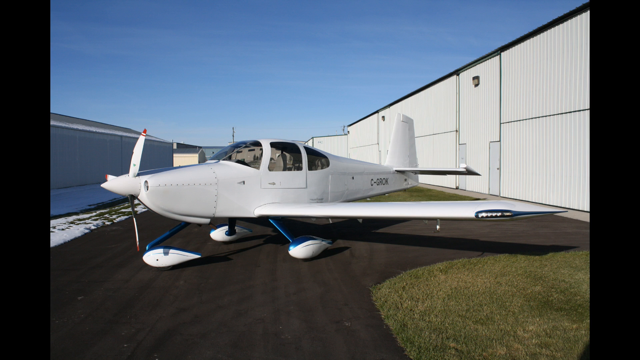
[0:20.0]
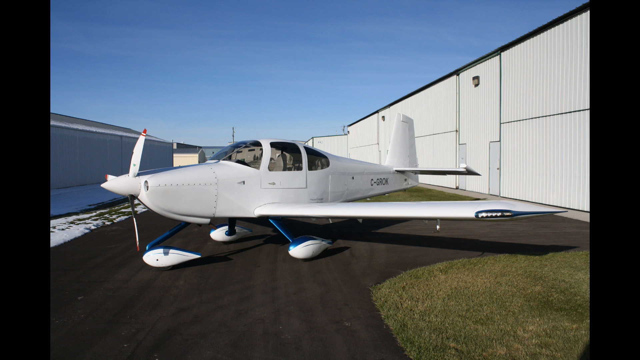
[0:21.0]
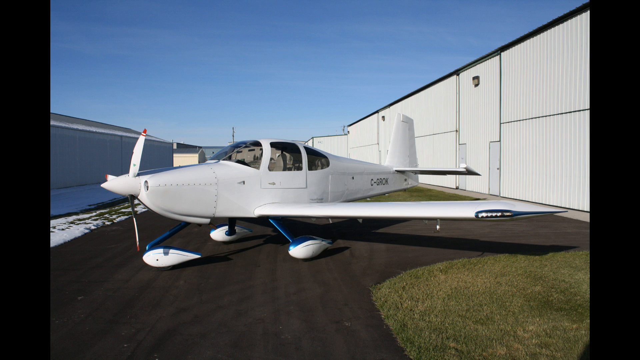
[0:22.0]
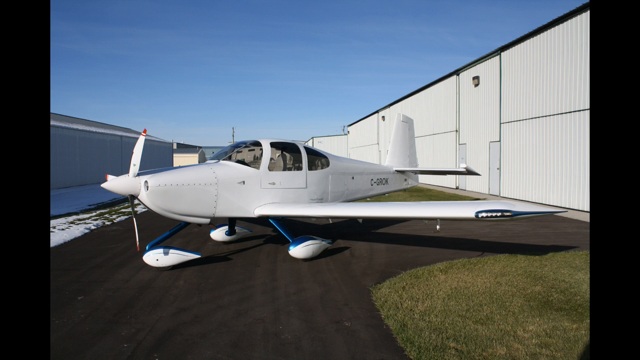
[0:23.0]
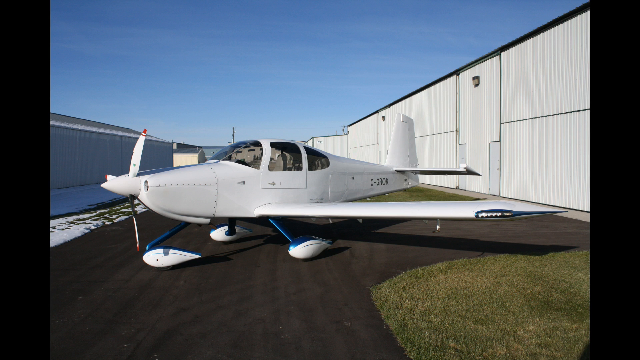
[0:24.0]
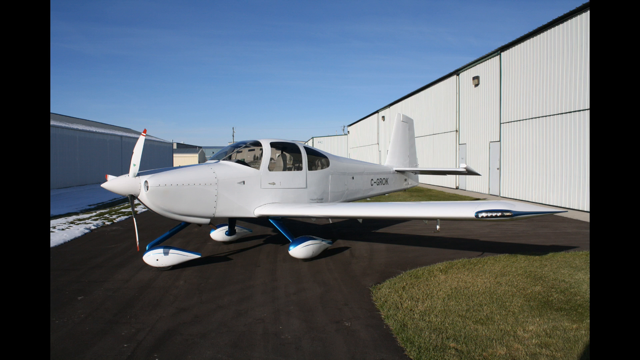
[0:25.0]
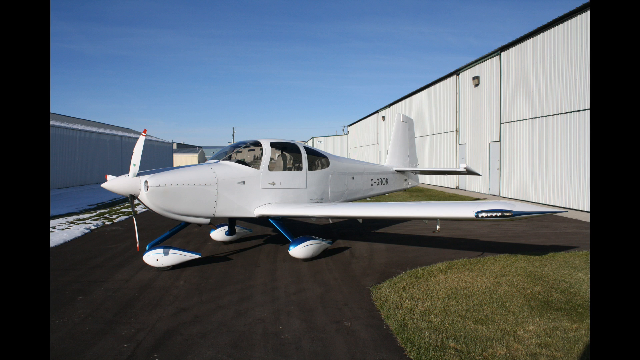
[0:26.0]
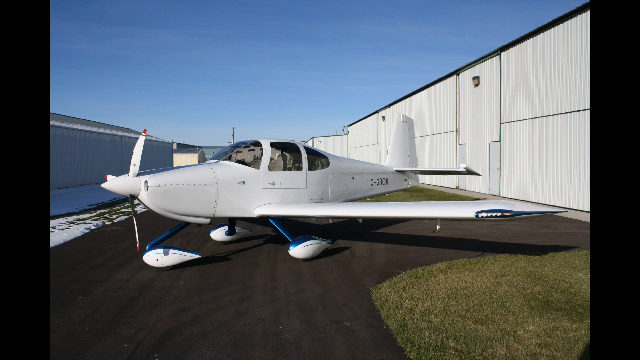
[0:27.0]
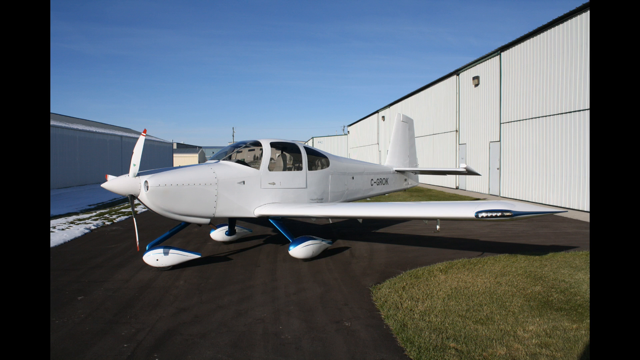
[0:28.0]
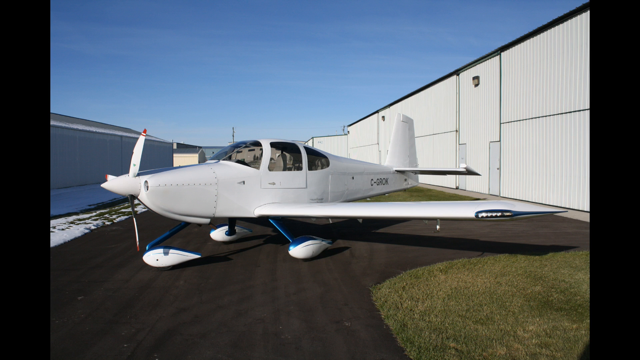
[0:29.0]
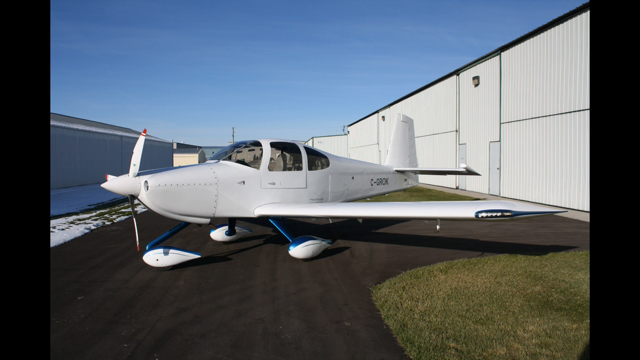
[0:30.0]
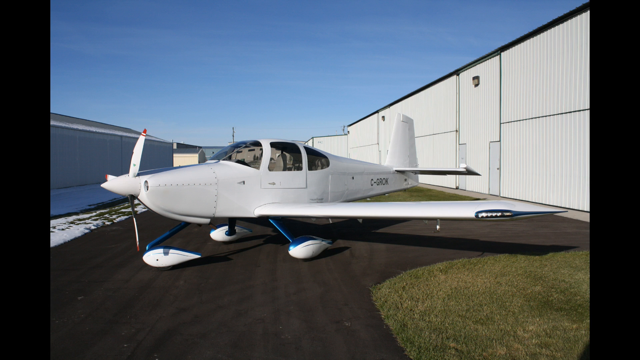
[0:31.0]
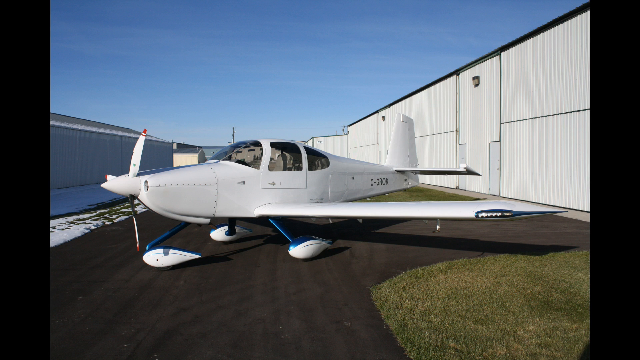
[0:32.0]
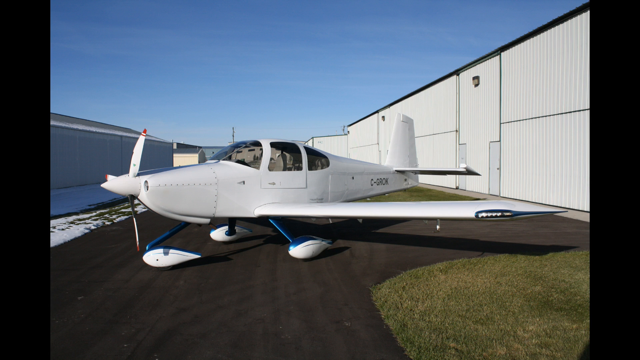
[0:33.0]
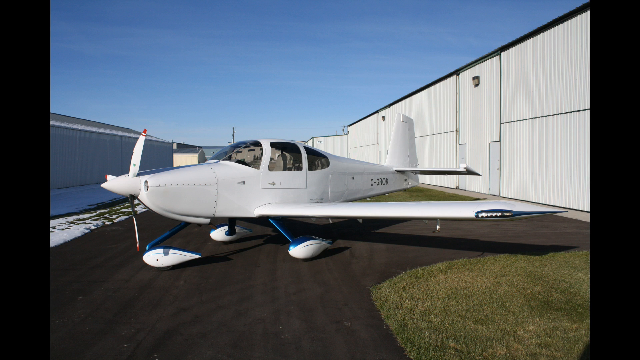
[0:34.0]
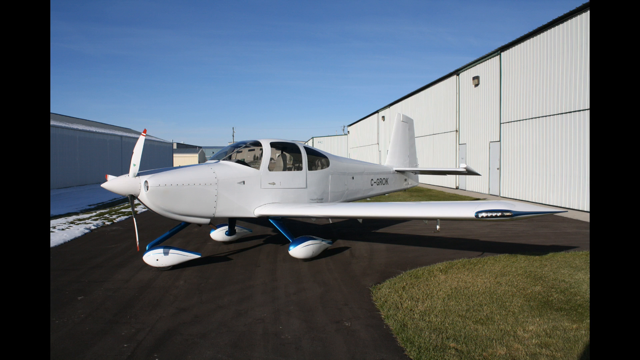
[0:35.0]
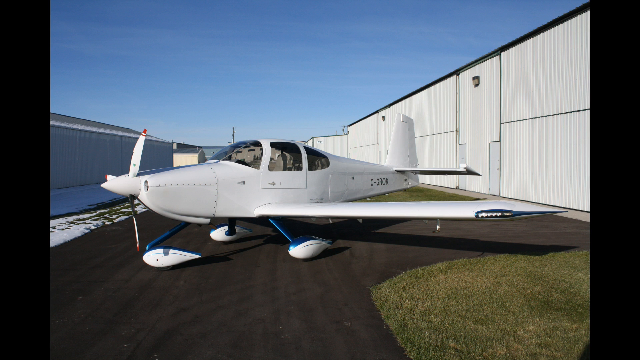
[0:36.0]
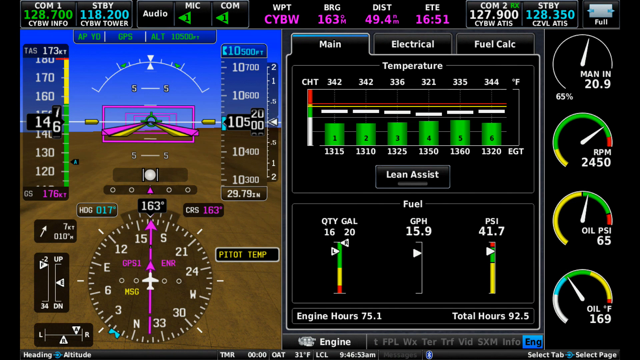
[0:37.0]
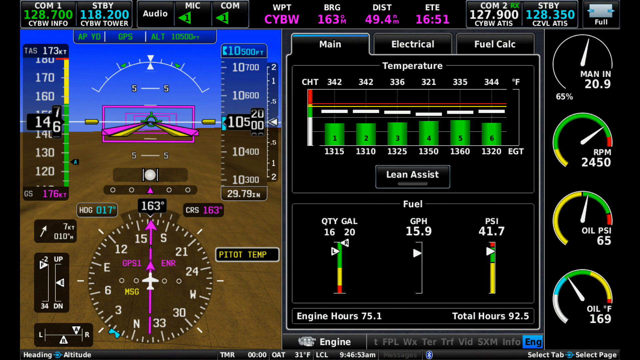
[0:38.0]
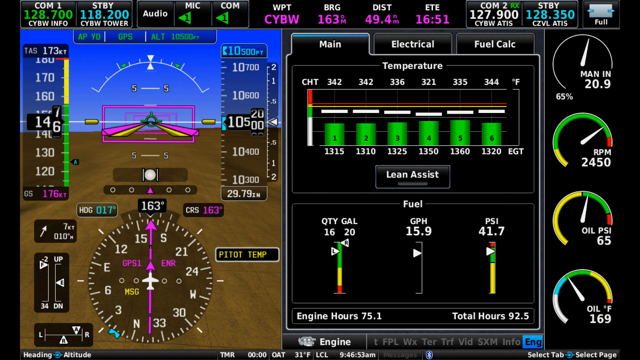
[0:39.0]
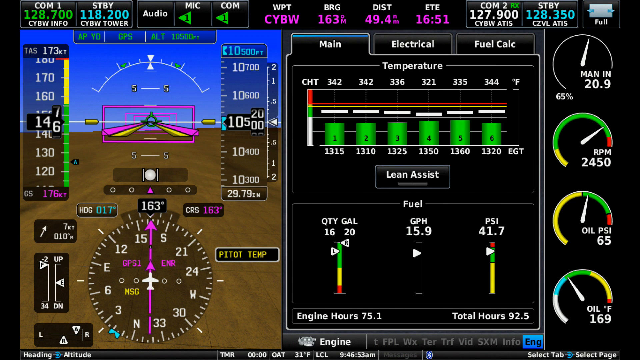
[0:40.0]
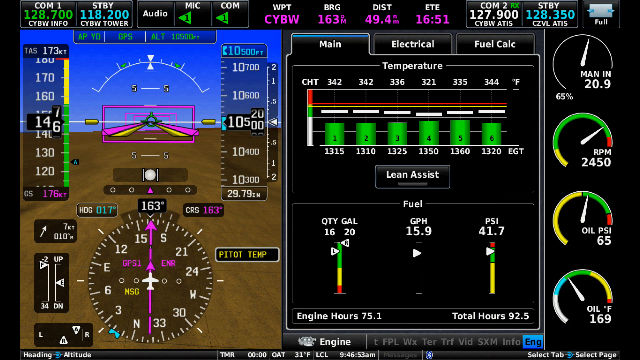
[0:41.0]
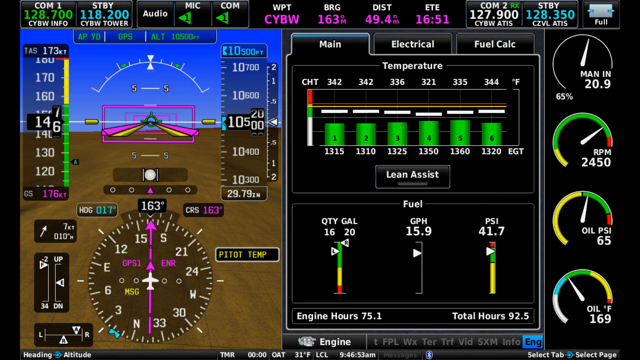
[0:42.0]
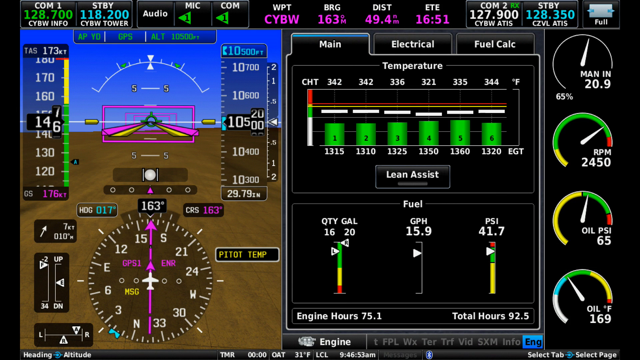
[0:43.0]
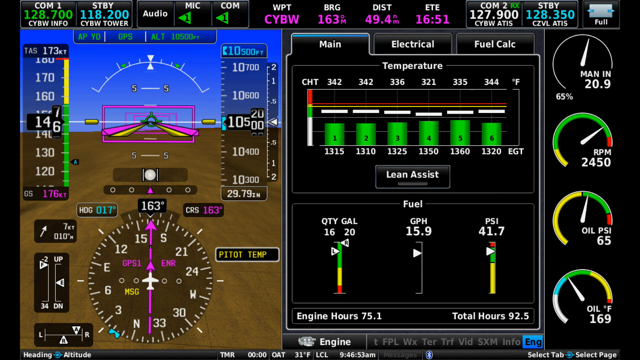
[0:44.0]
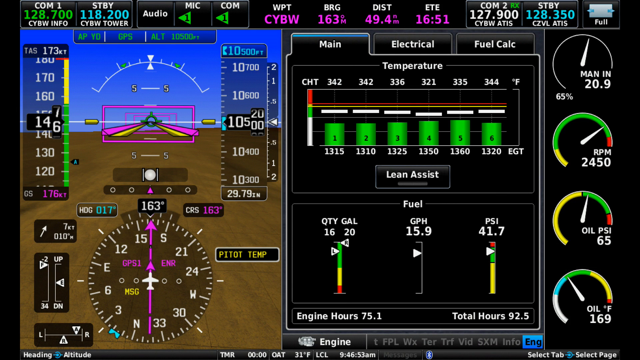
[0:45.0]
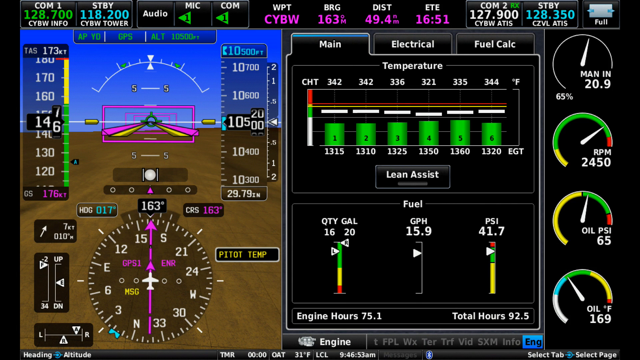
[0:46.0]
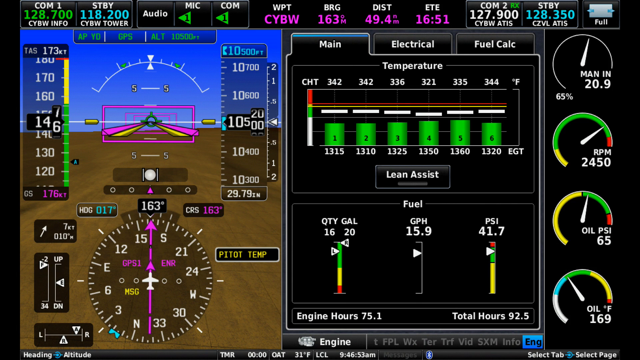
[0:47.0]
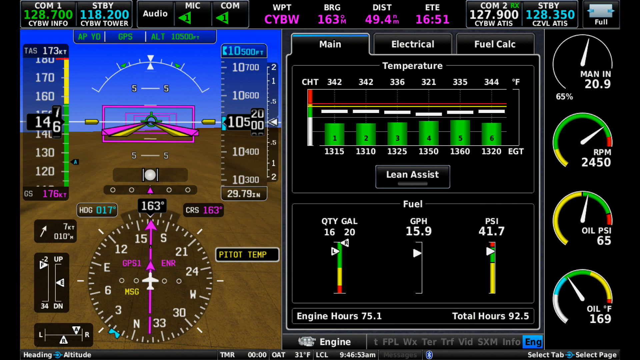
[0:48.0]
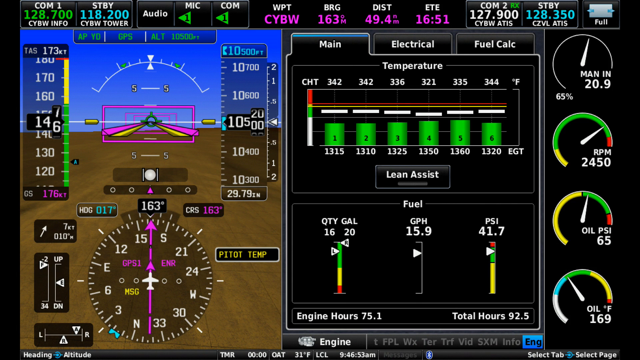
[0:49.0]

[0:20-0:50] A white airplane with blue coloring is kind of parked on the ground, with black text on it that says "CGROK." There is a building on the right side and one on the left. Snow is on the grass on the left, while the grass on the right is untouched, under a blue sky. The building on the right has about two doors and some lights. The scene changes to a screen with a black background on the right containing sections such as "main," "electrical," and "fuel calculation," and a temperature section reading "CHT 34234, 2336, 321, 335, and 344 Fahrenheit." Little green cylinders are labeled with black numbers 1 through 6, with white text reading "1,315, 1,310, 1,325, 1,350, 1,360, 1,320 EGT." There is a small button that says "lean assist," and a fuel section reading "quantity gallon 1620, GPH 15.9, PSI 41.7, engine hour 75.1, total hours 92.5." Information on the right reads "man in 20.9, 65, RPM 2450, oil PSI 65, oil Fahrenheit 169." A display on the left shows "pilot temp"; it looks like a screen for someone flying to check information such as GPS. Text across the top reads "COM 1 128.700 CYBW info STBY 118.200 CYBW tower audio mic 1 COM 1 WPT CYBW BRG 163M distance 49.4 ETE 1651 COM 2 RX 127.900 CYBW ATIS STBY 128.350 CDVL ATIS," with a little box that says "full." Then text pops up that says "10.9 mpg."